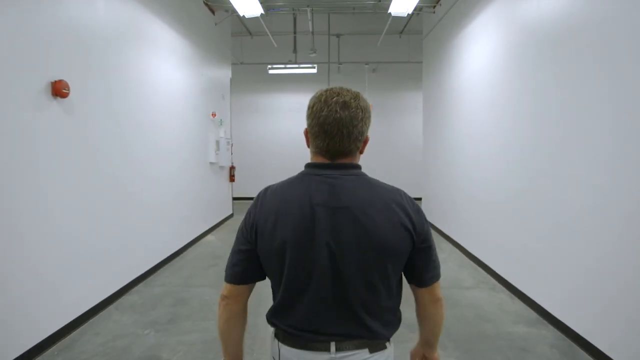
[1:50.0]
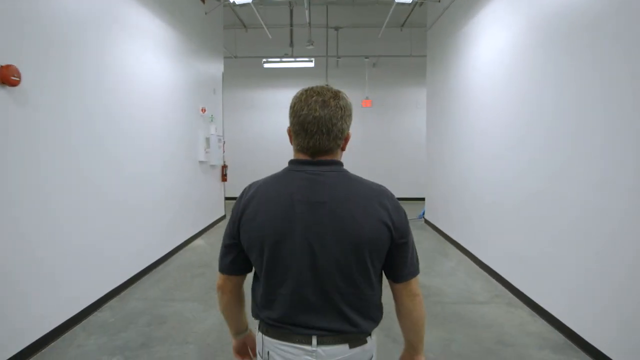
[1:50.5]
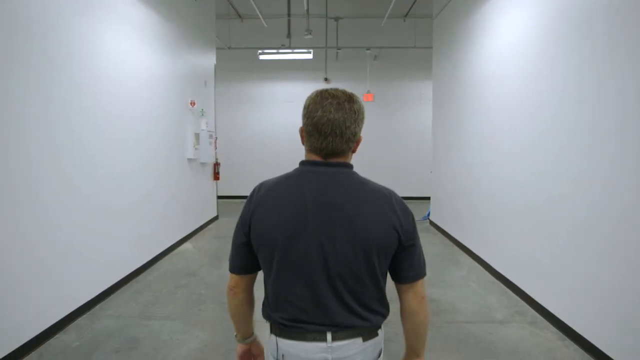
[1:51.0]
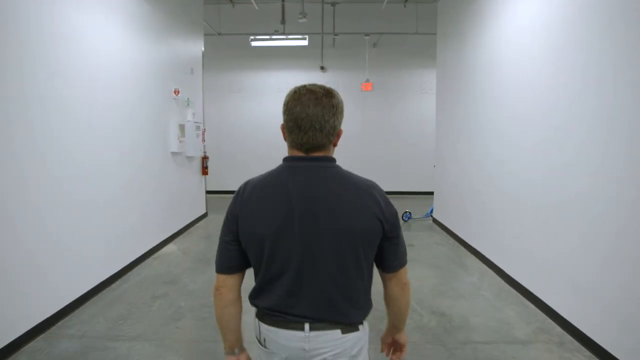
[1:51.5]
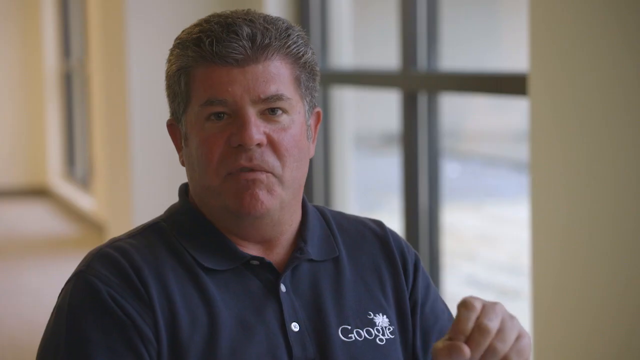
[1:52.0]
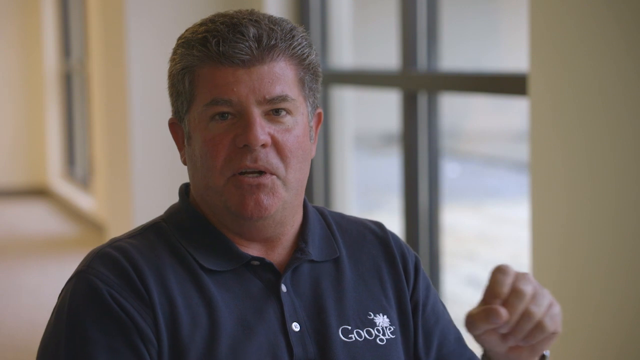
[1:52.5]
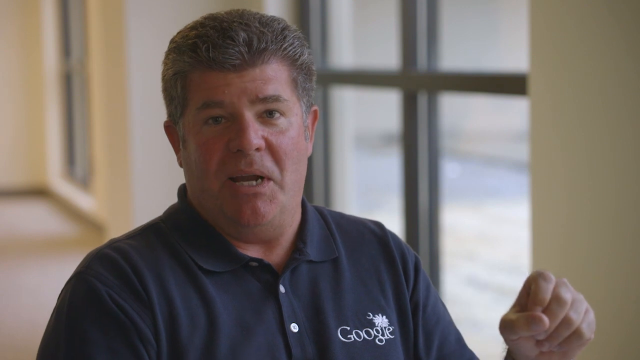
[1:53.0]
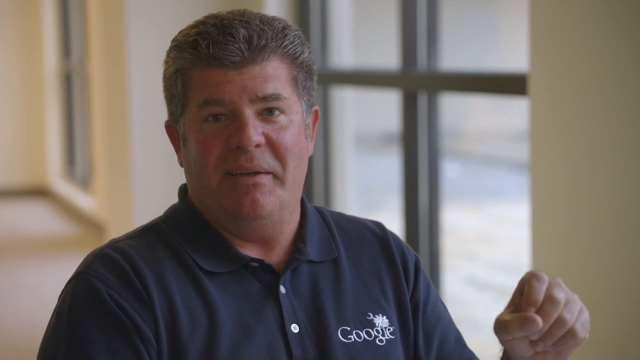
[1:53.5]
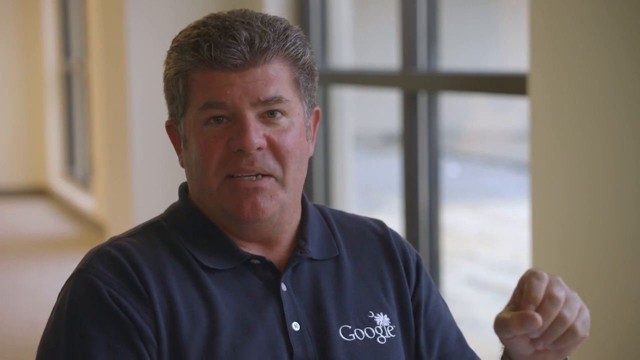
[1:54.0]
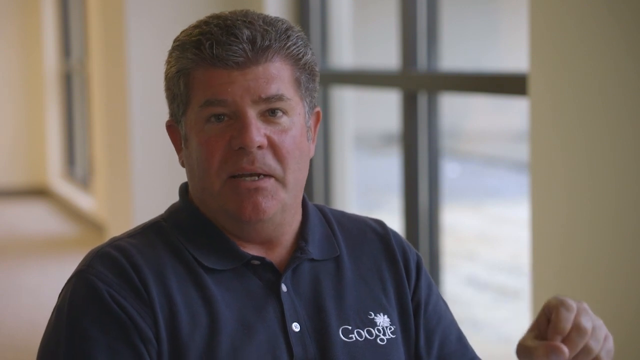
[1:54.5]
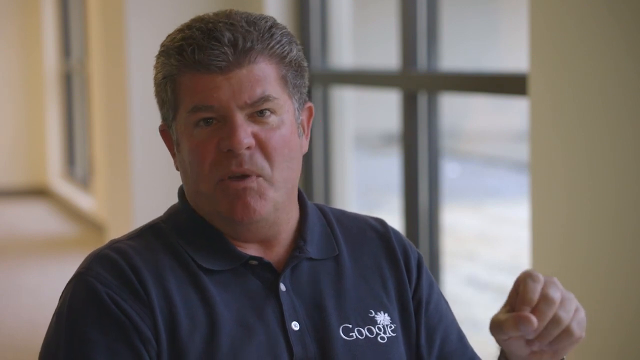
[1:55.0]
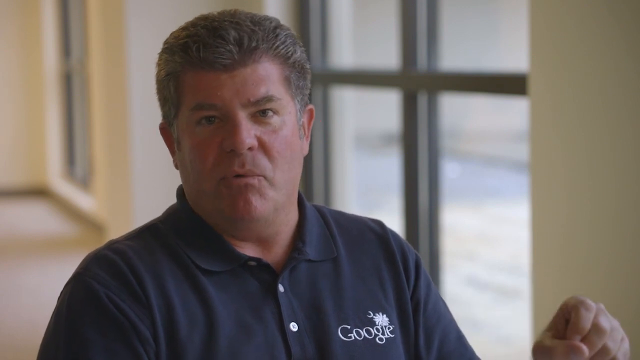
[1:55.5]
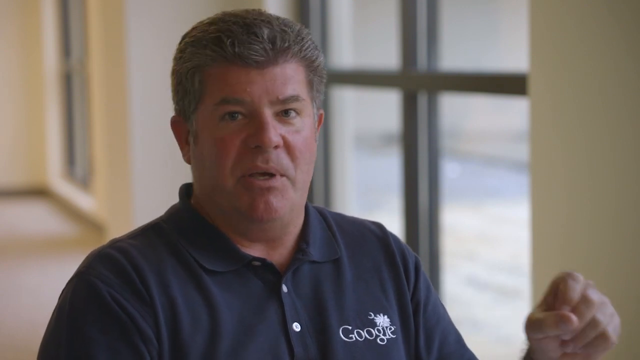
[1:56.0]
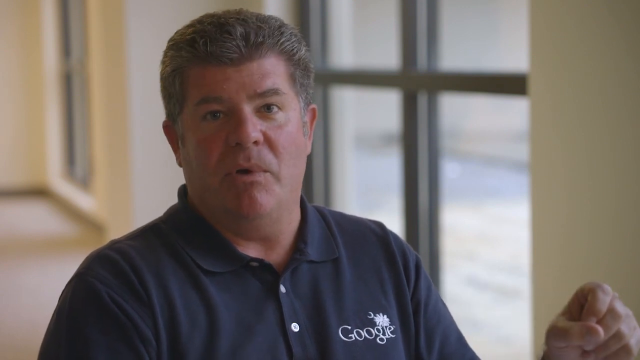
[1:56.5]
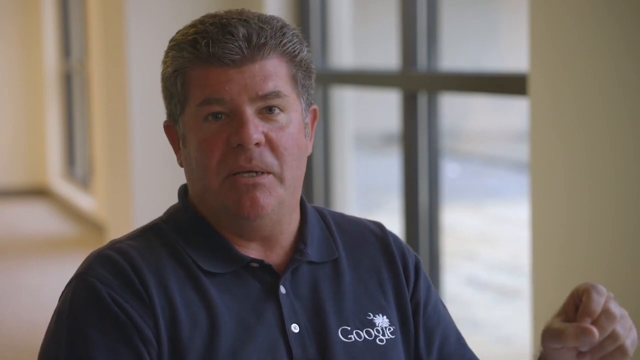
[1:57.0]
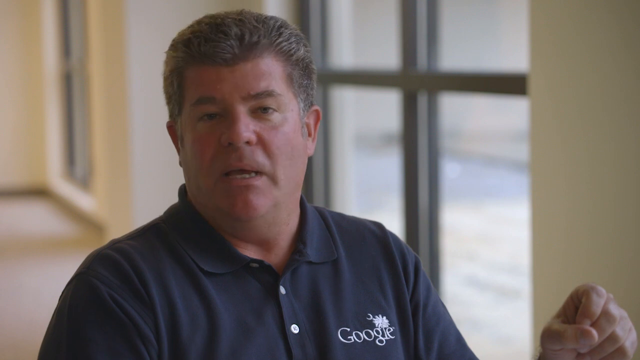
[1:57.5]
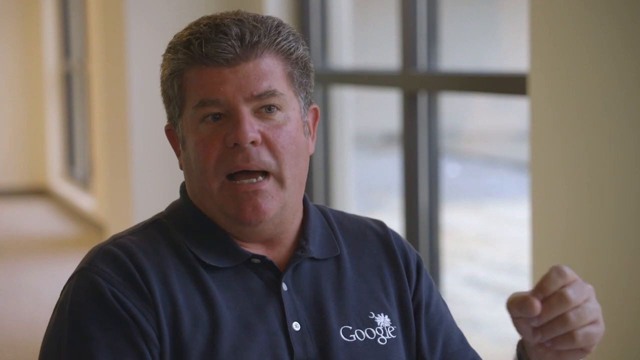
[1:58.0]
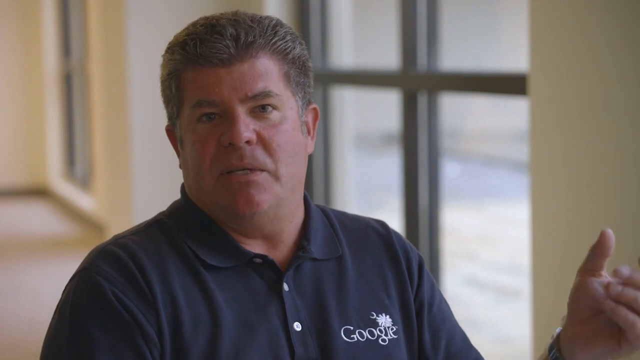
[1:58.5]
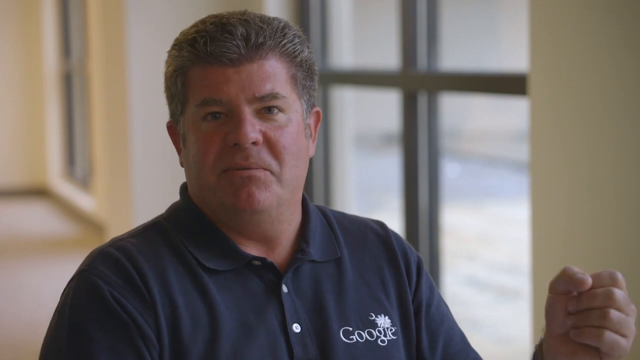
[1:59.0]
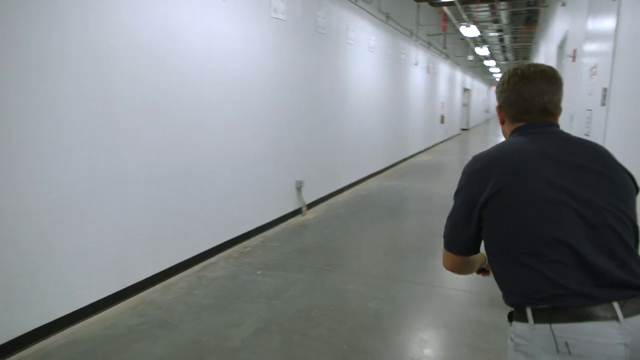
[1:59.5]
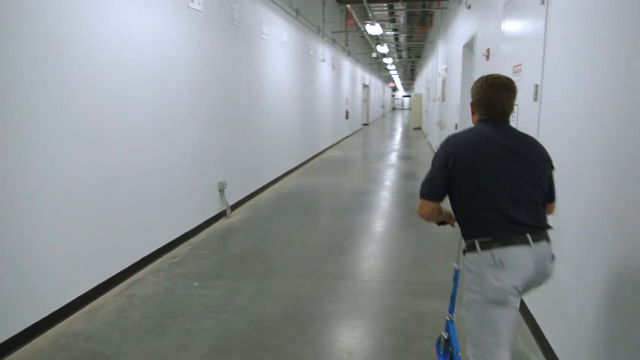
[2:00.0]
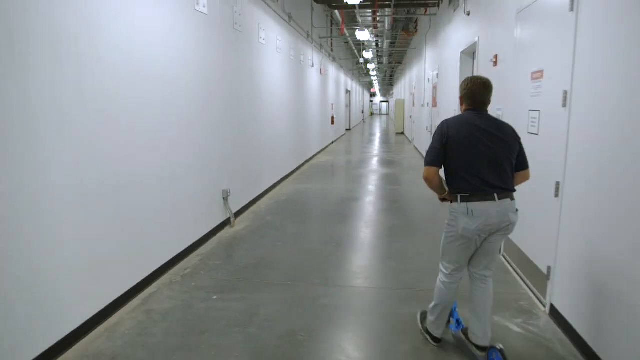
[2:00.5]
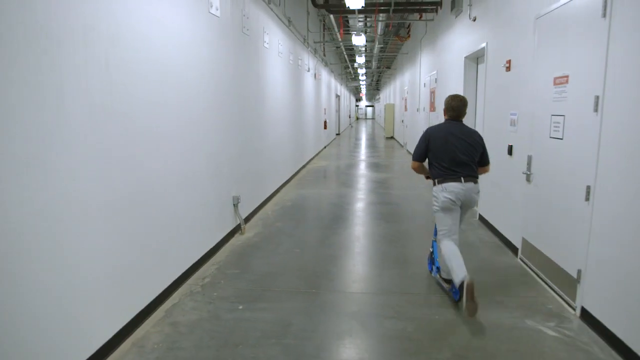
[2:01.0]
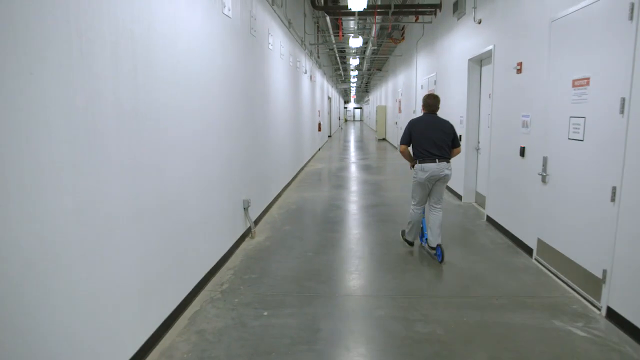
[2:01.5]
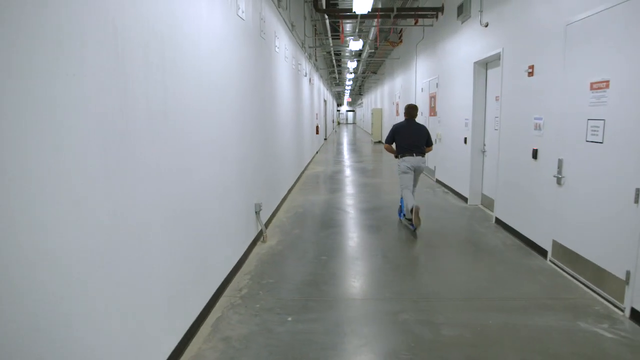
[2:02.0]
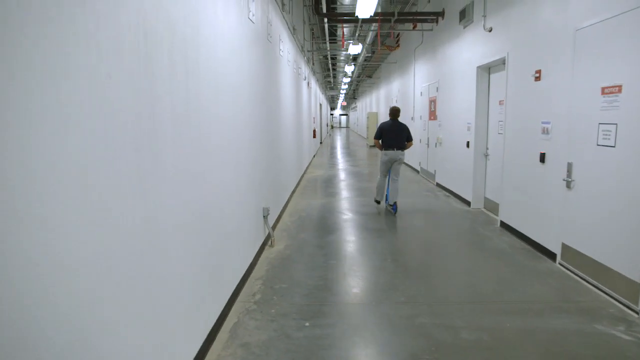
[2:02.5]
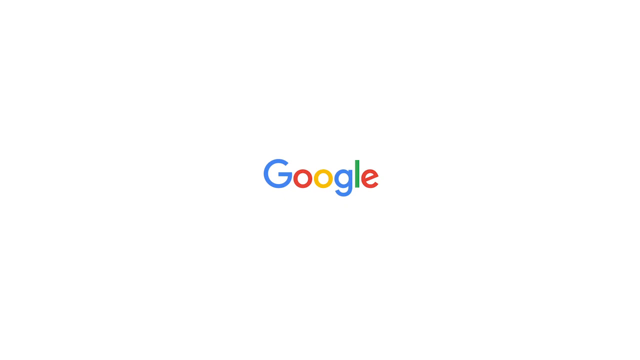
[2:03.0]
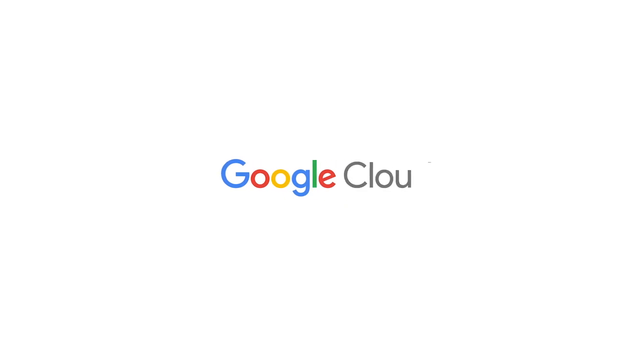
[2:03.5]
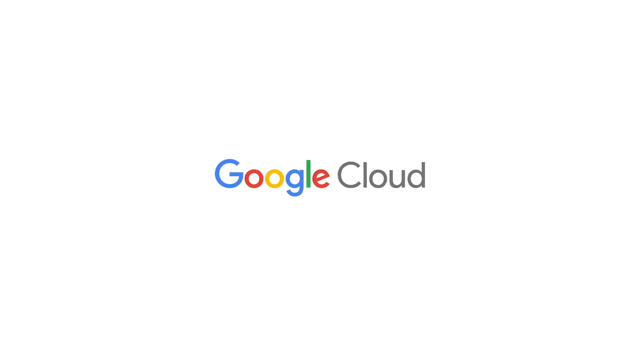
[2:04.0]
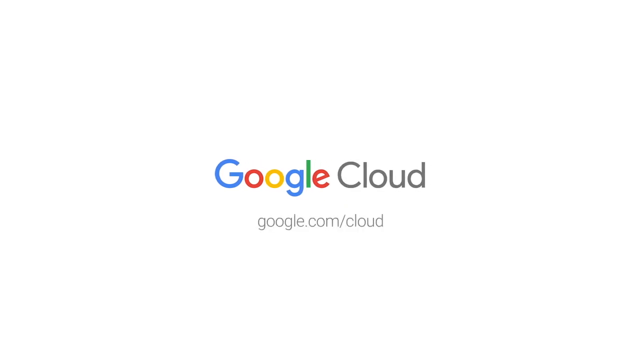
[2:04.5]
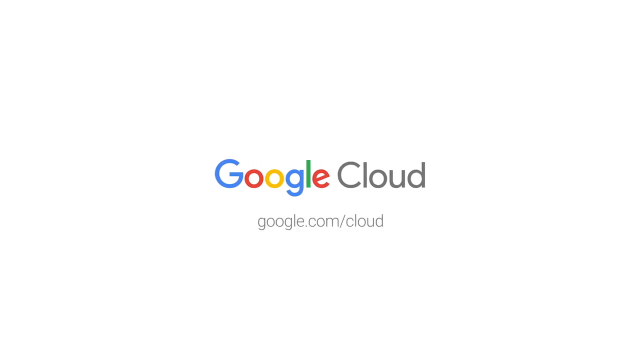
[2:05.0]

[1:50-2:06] The man sits in the same room seen at the beginning, talking. He walks down the same hallway as before, but his destination is not shown; the video cuts back to him talking. He then rides a scooter down the hallway. The place still looks very cold, all concrete and white walls; it is empty and the doors look secure. The final screen shows the Google logo and says "google cloud".